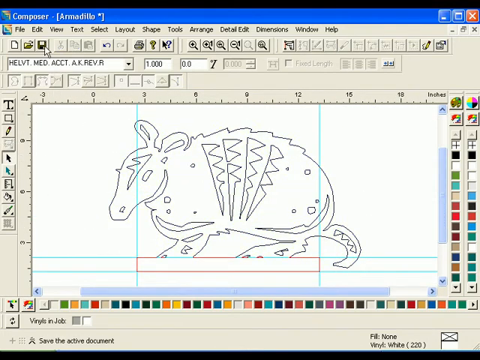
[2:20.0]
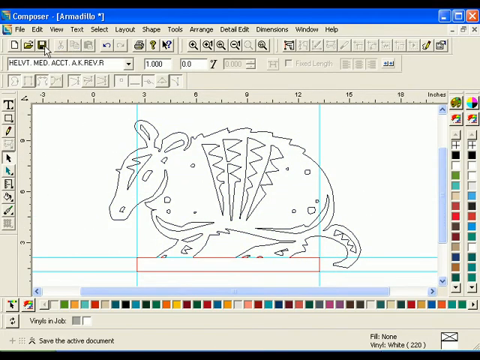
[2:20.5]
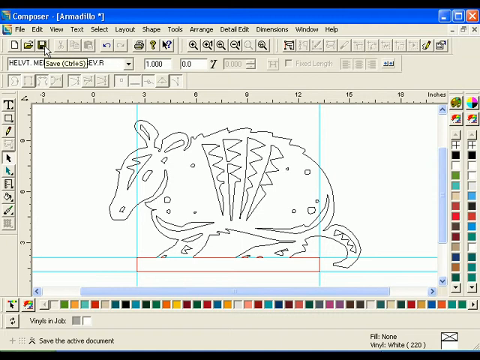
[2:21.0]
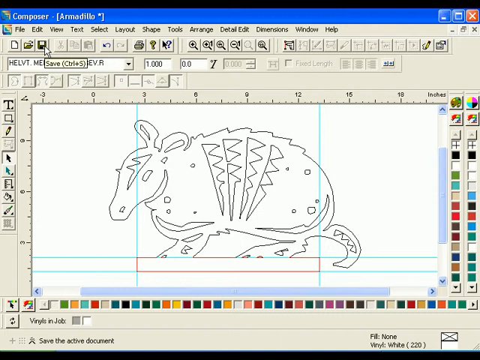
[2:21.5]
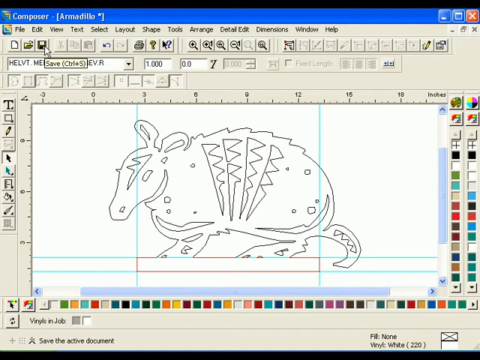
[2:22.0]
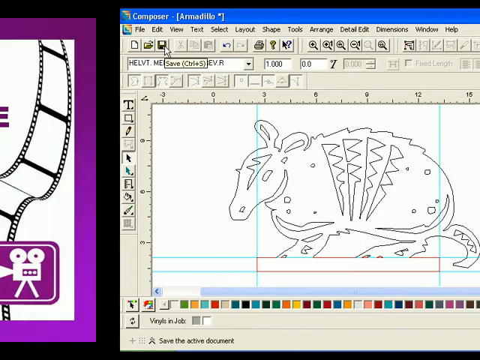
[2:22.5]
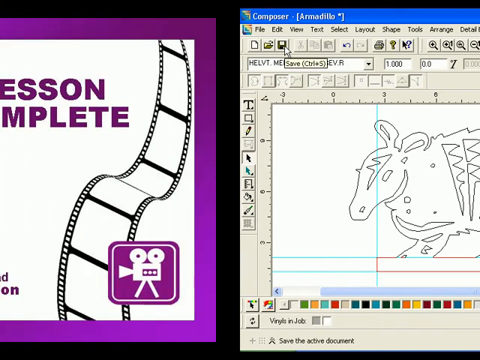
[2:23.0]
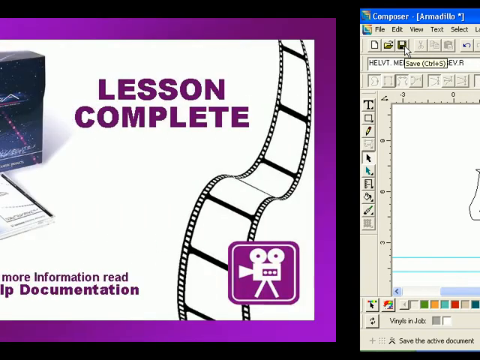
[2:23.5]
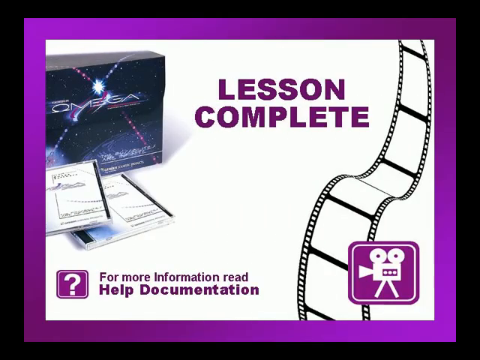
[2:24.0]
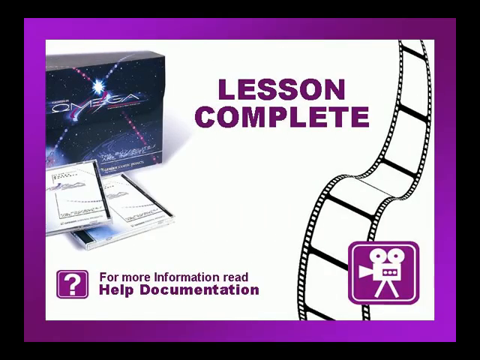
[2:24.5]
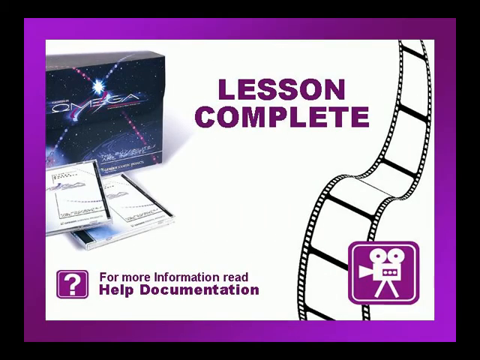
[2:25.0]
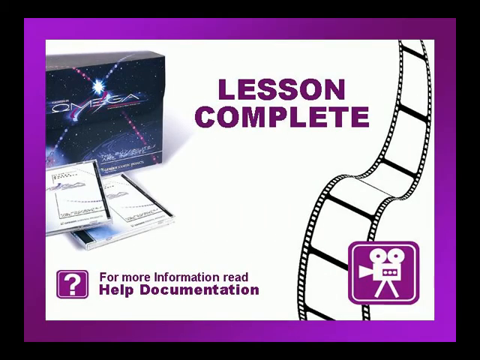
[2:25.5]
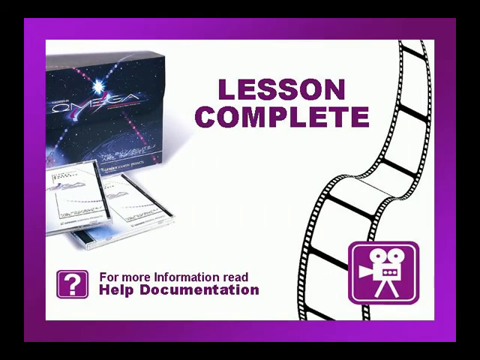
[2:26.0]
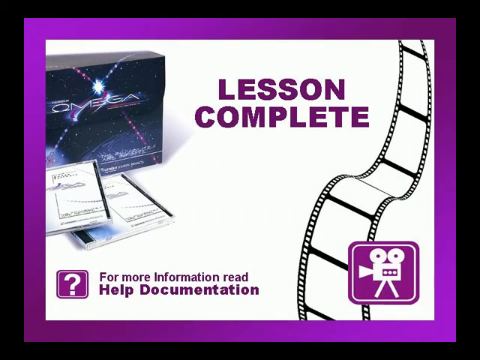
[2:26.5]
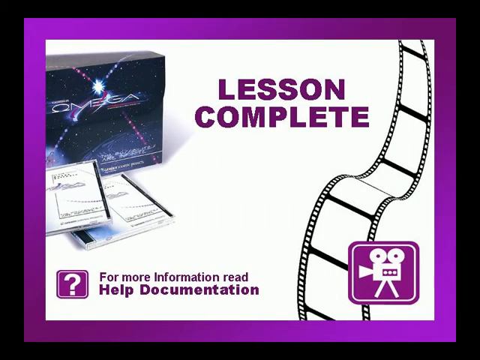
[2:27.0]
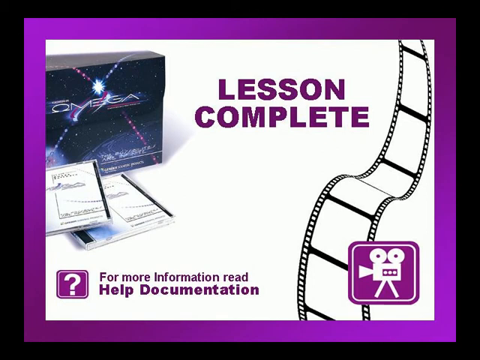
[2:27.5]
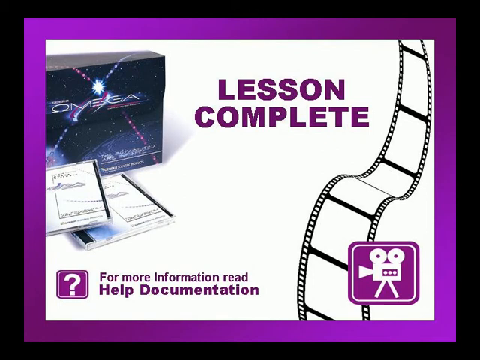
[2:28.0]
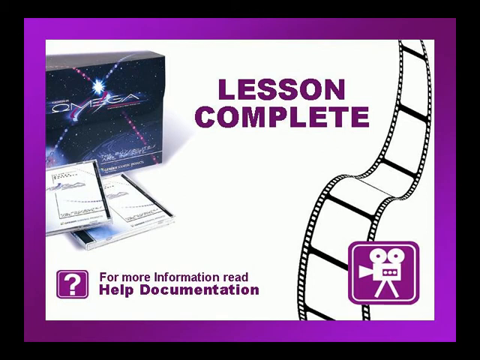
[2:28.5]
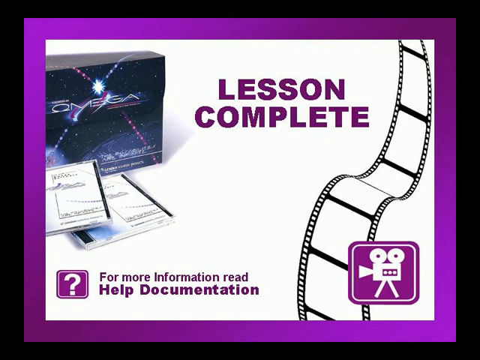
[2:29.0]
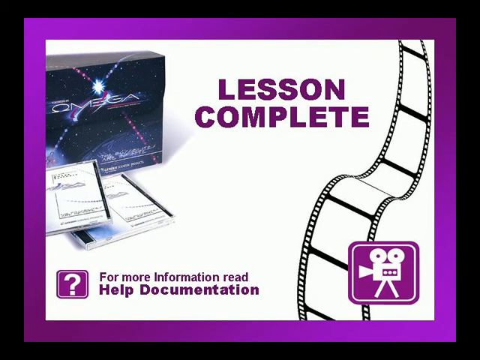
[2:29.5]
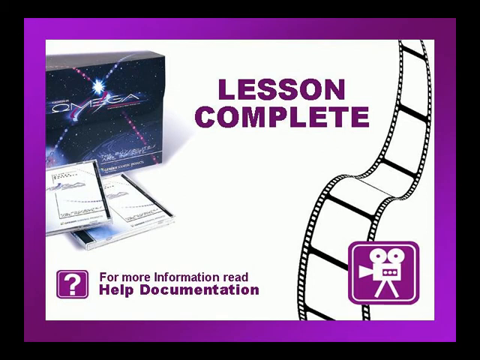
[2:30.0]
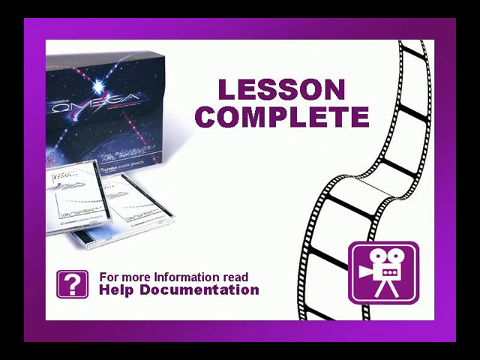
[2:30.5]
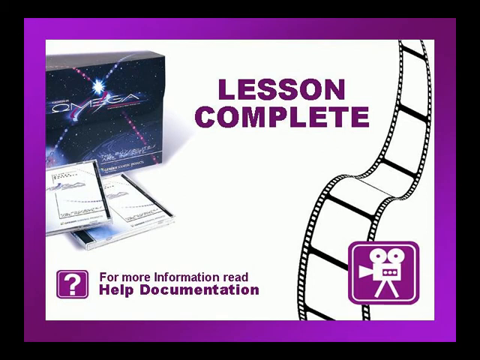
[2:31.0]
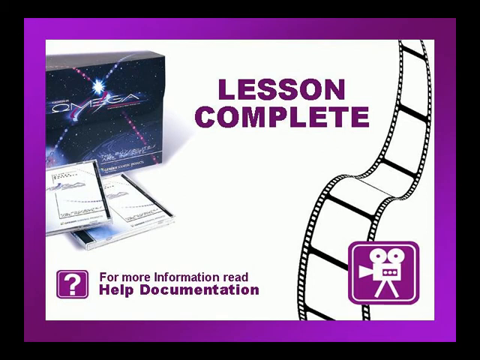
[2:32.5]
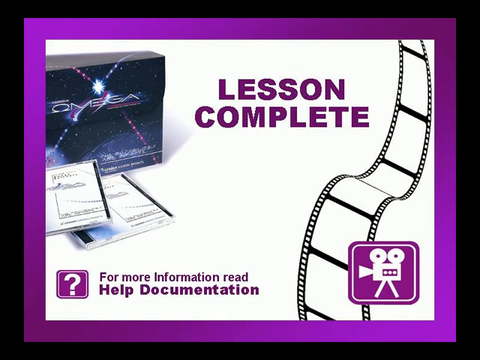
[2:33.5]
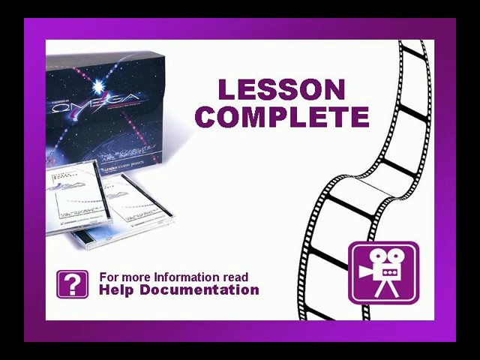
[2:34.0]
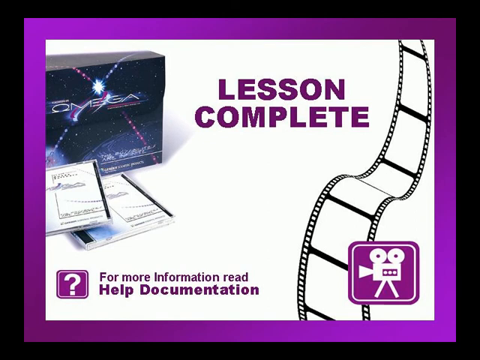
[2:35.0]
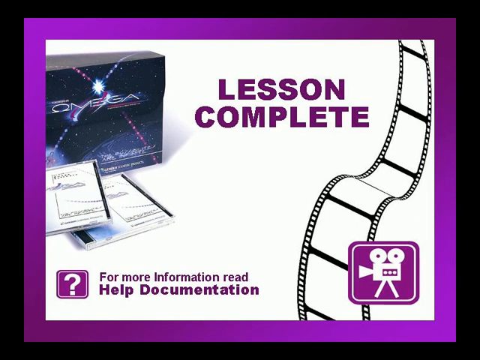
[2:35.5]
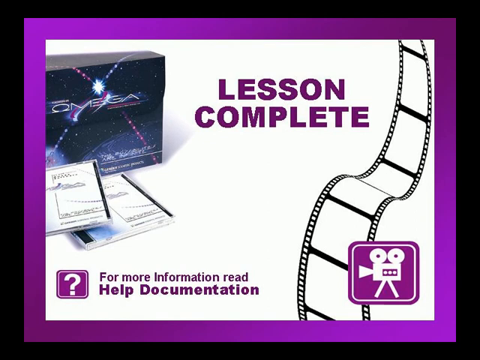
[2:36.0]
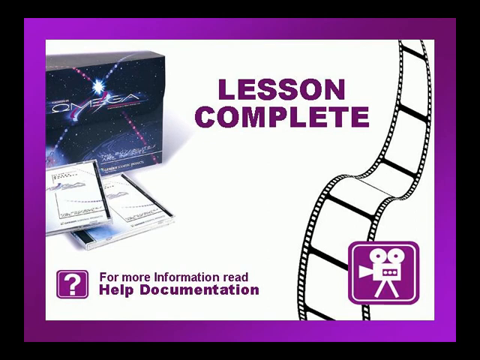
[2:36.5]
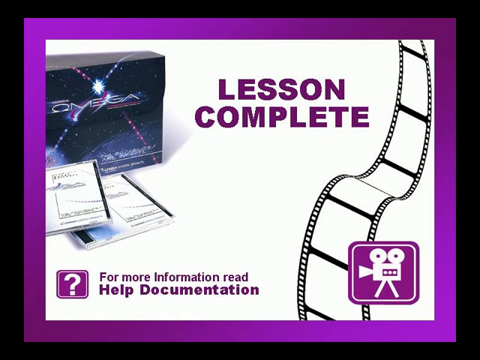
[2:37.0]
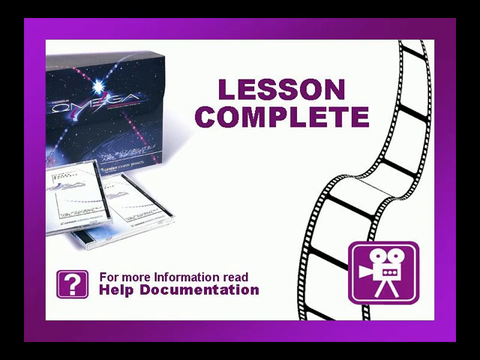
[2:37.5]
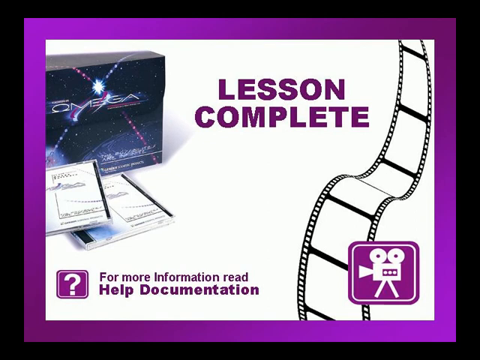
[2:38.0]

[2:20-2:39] An apparent editing tool shows a white canvas with a line drawing of an armadillo facing left. Teal lines at the bottom outline the top, bottom, left and right edges of the base the armadillo stands on, and the base is outlined in red; the teal lines look like they extend to the top, left, right and bottom of the white canvas. A white cursor moves to an icon at the top left that reads "save control plus S." The video then slides over to the right and transitions to what appears to be the outro screen, which has a very thick purple border. At the top right, purple text reads "lesson complete." At the bottom left is a purple square with a white question mark inside, and to its right purple text reads "for more information, read help documentation." On the right side is what looks like black-and-white old-style film running downward from the top right toward the bottom right. At the top left there appears to be a black box with white text "Omega" on it, and in front of it are two white CD cases. At the bottom right, in the foreground, is what looks like a purple square icon containing a white silhouette of what looks like an old-style cinema projector, with two reels of film at the top.